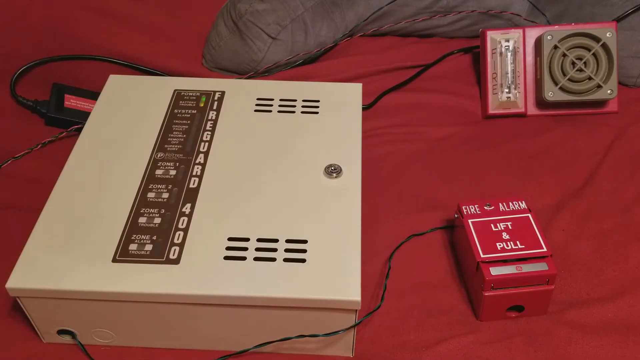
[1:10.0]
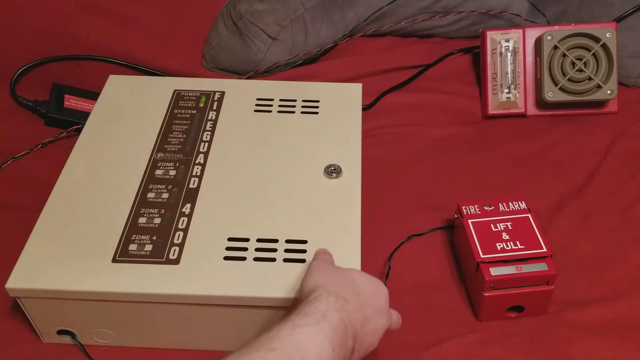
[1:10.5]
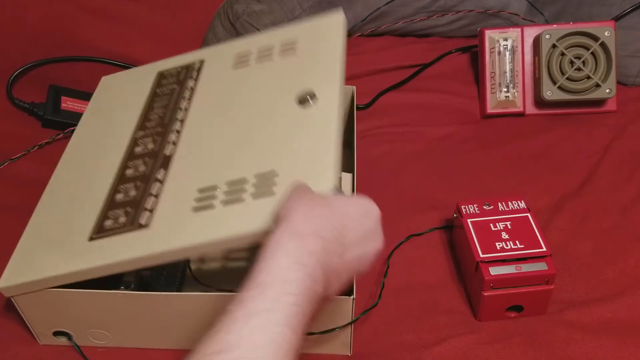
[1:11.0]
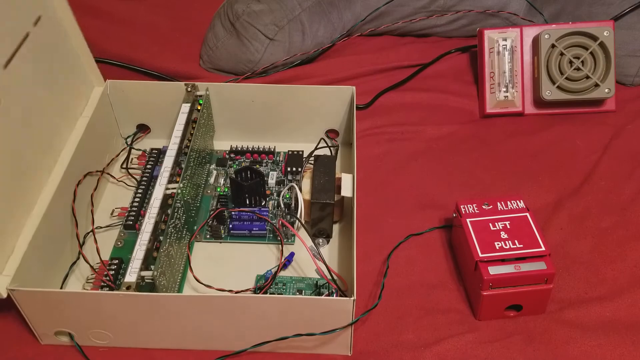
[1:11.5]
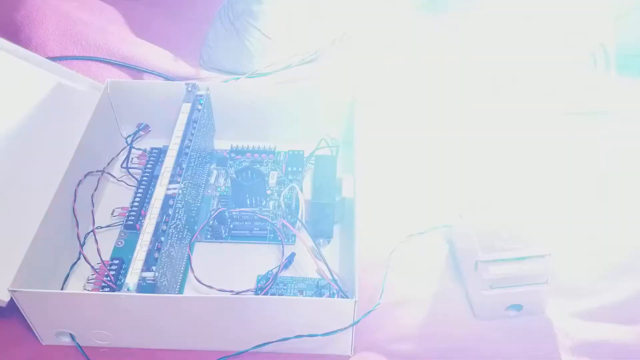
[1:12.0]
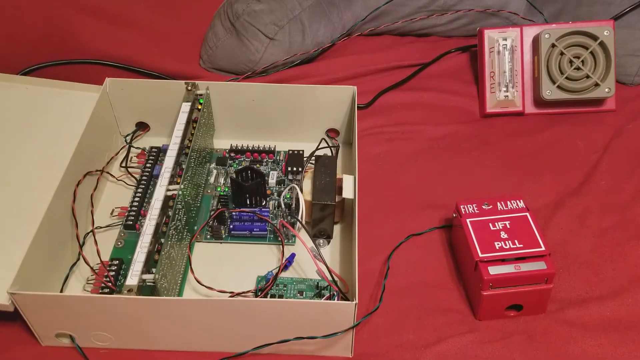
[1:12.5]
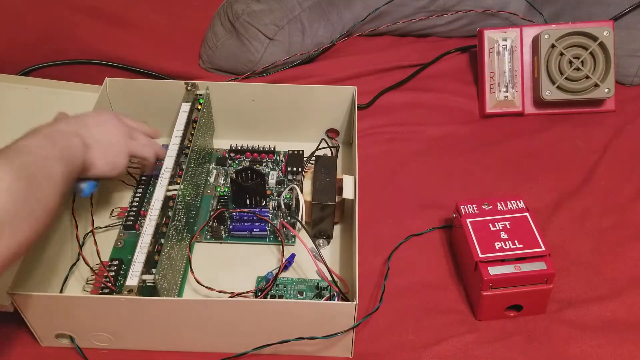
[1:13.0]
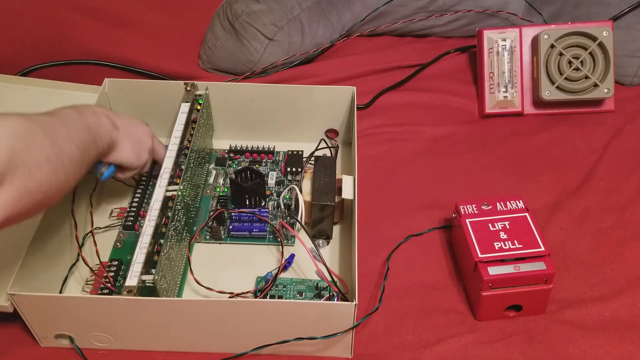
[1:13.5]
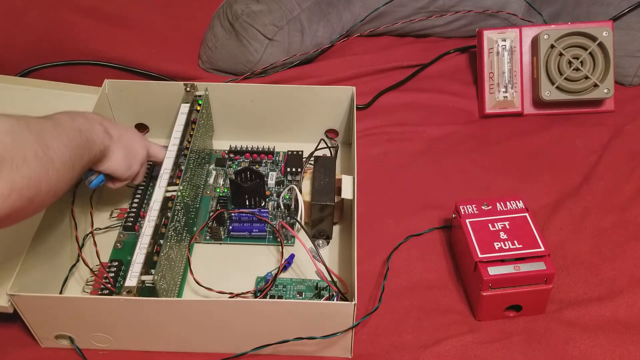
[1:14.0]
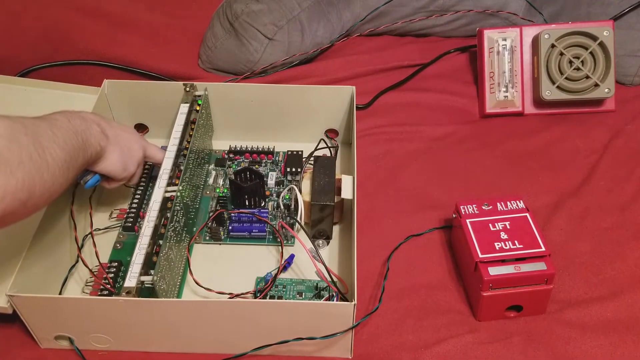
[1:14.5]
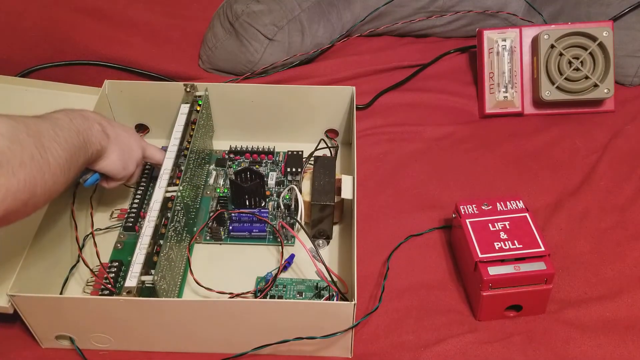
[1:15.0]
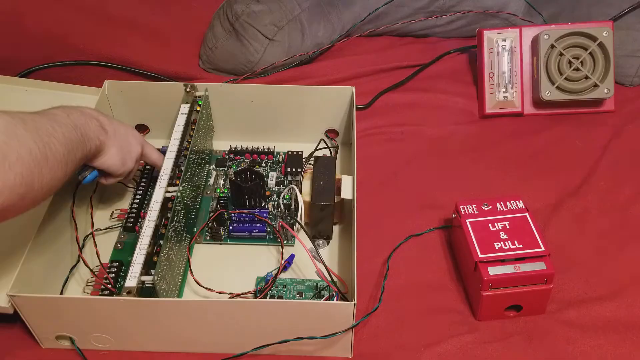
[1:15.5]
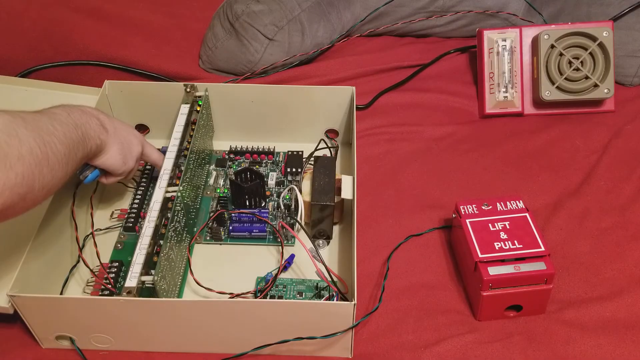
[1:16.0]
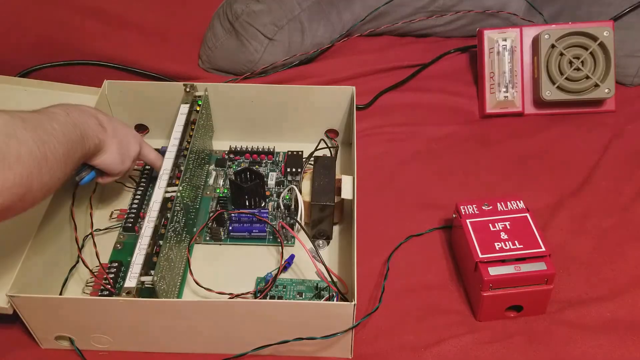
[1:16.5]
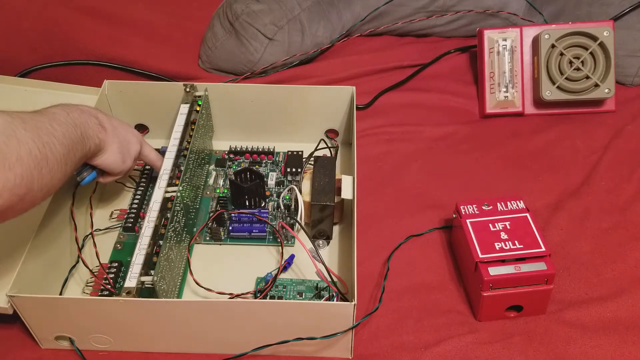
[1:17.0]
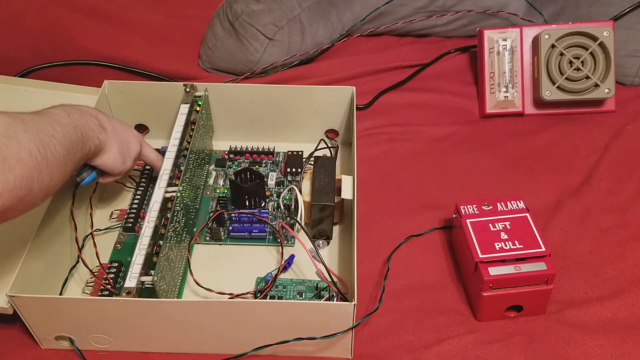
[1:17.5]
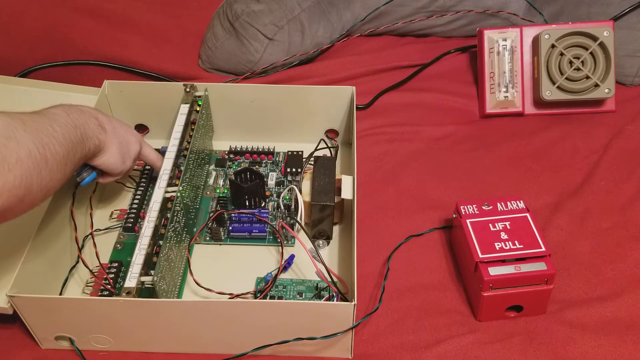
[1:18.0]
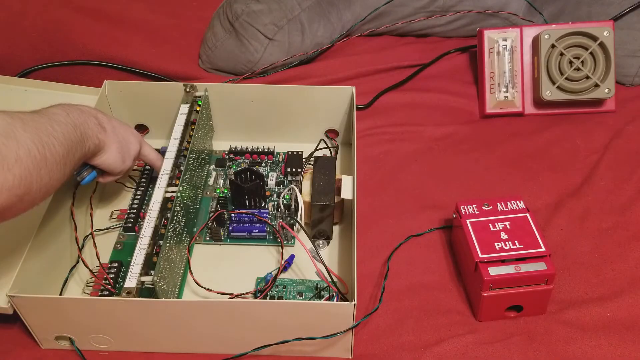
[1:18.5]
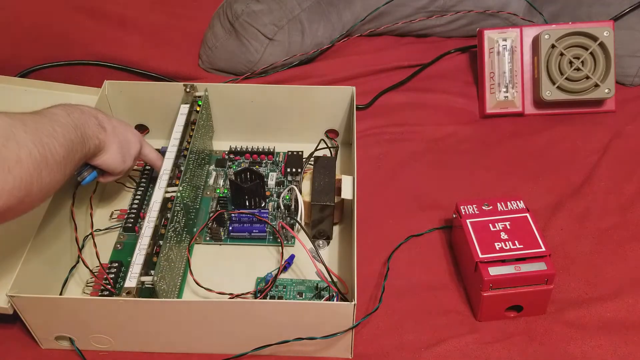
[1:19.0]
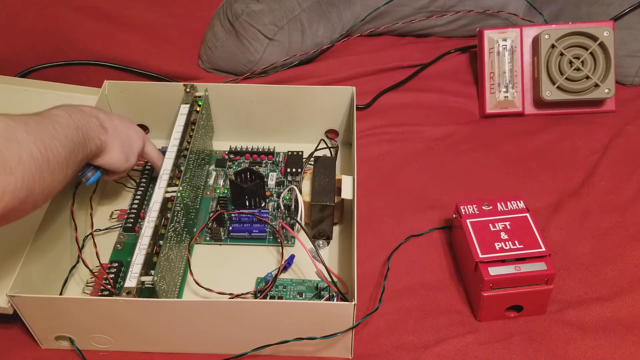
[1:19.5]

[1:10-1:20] As the white light and the red lights on the main box continue to flash, the person's right hand re-enters the frame and opens the main box again, lifting the lid completely from the right. The person appears to press and hold down some buttons on one part of the circuit board inside the box. After a few seconds, the LEDs that were flashing red all start to flash yellow in unison, along with LEDs that previously were not on, so perhaps the box has been reset.